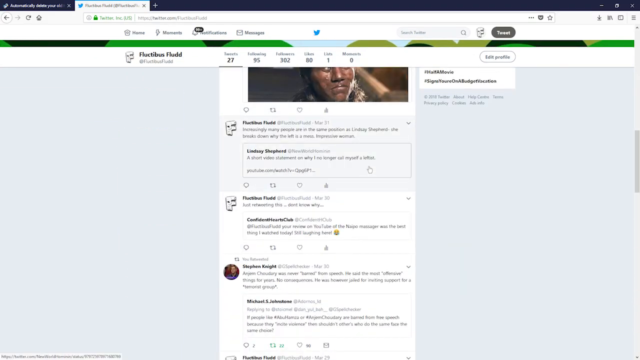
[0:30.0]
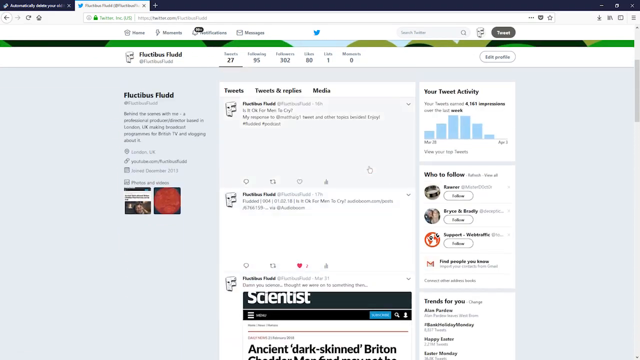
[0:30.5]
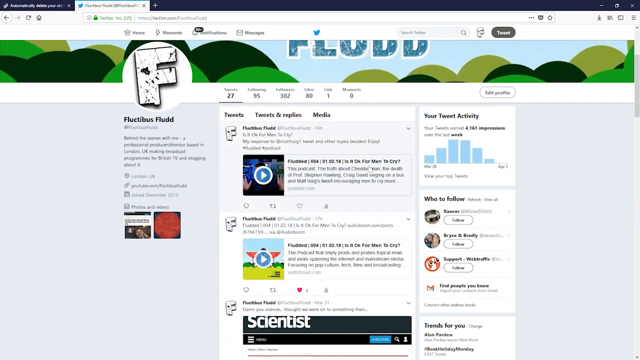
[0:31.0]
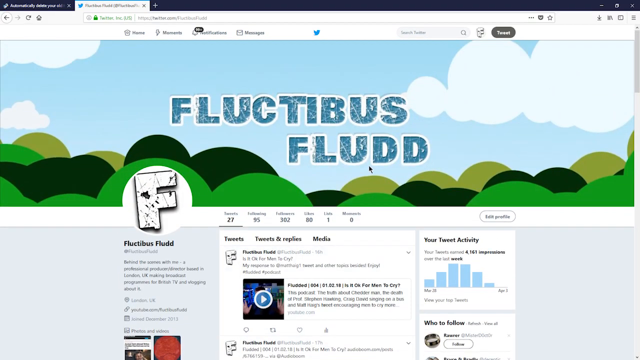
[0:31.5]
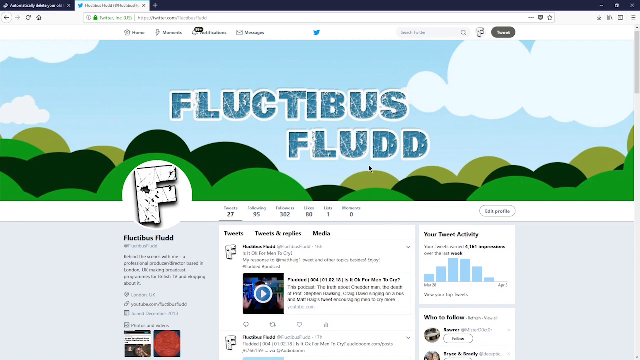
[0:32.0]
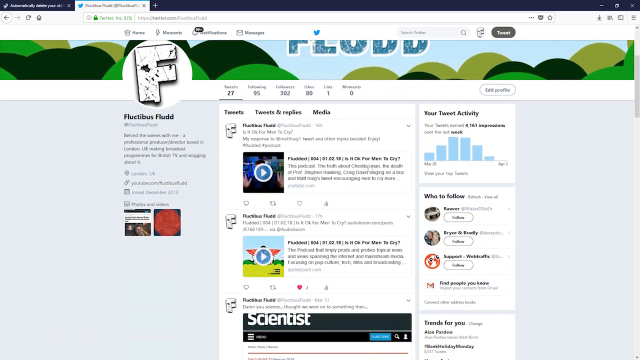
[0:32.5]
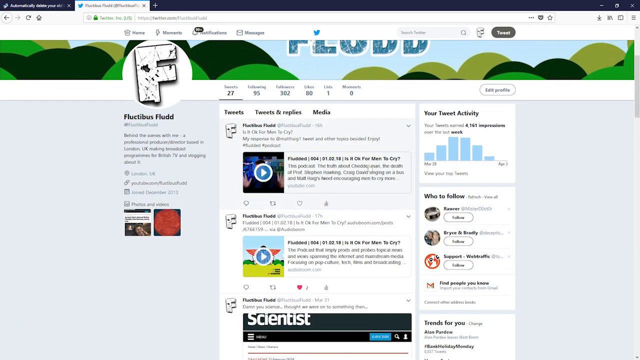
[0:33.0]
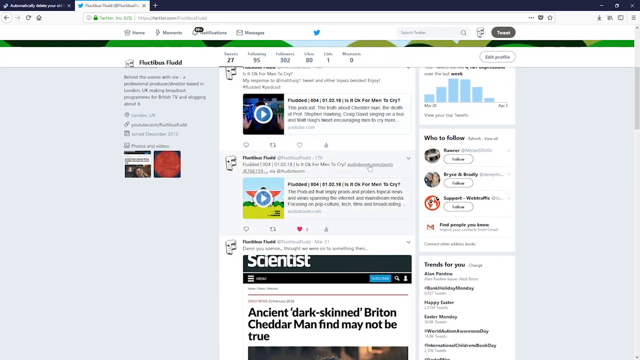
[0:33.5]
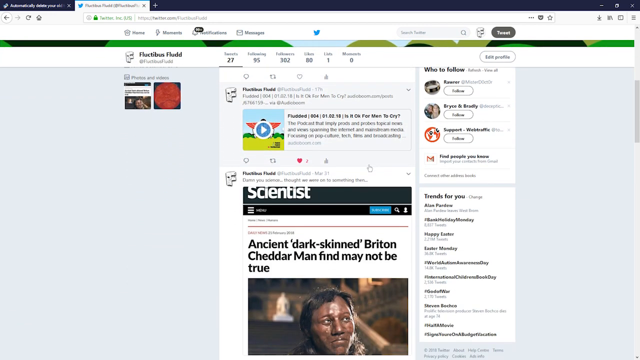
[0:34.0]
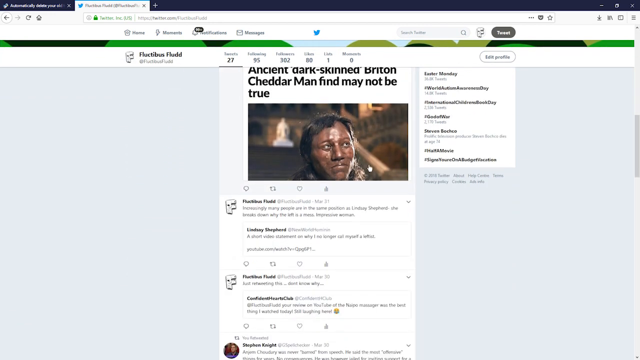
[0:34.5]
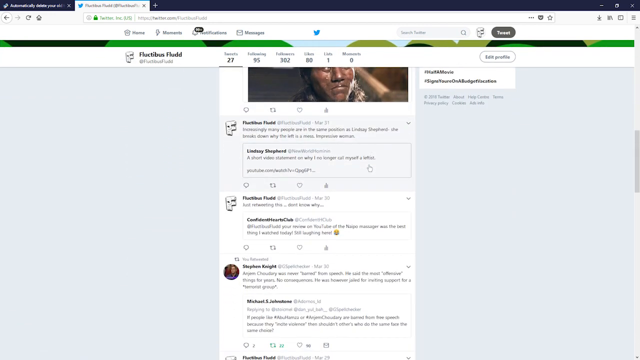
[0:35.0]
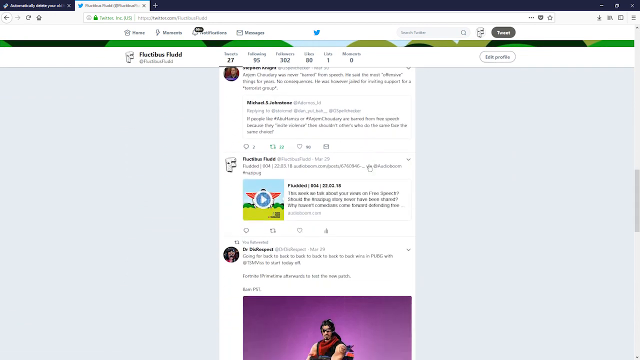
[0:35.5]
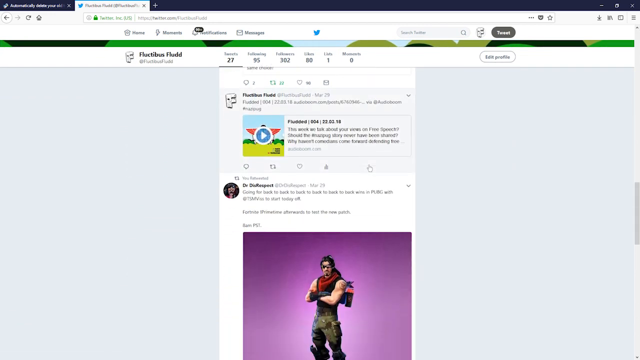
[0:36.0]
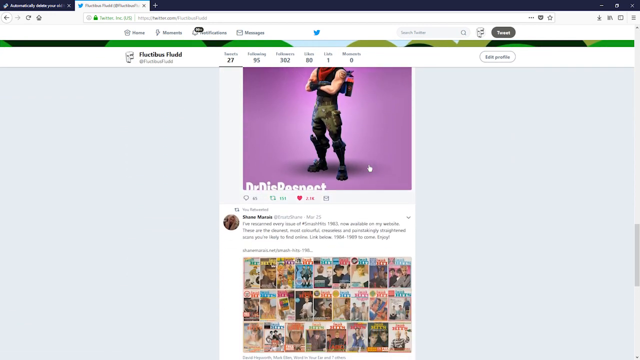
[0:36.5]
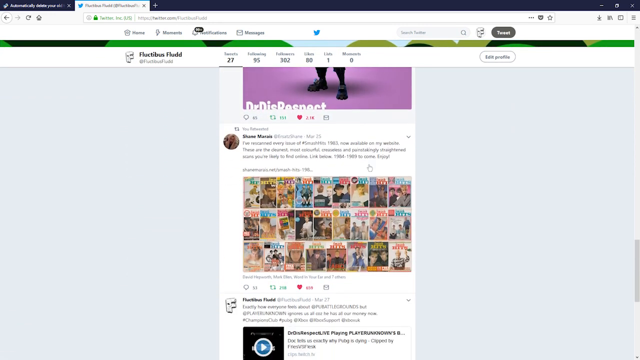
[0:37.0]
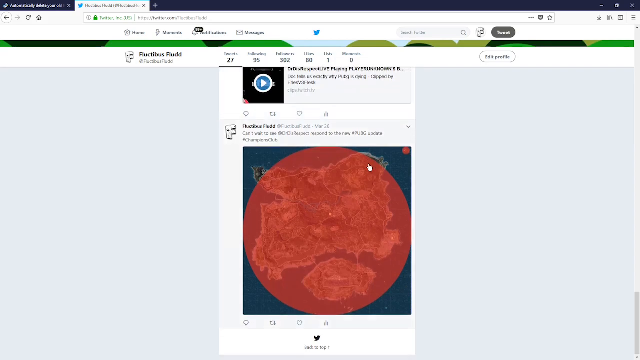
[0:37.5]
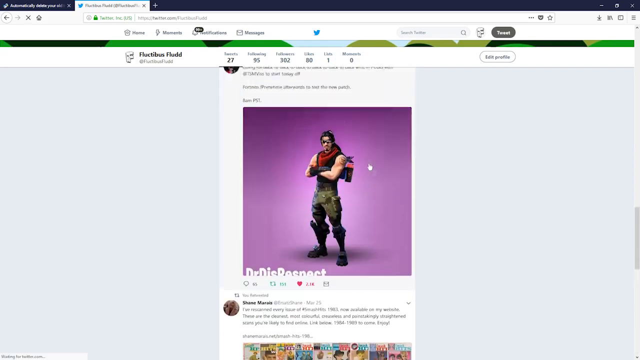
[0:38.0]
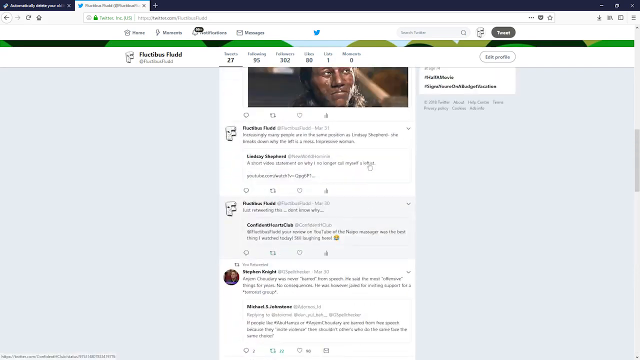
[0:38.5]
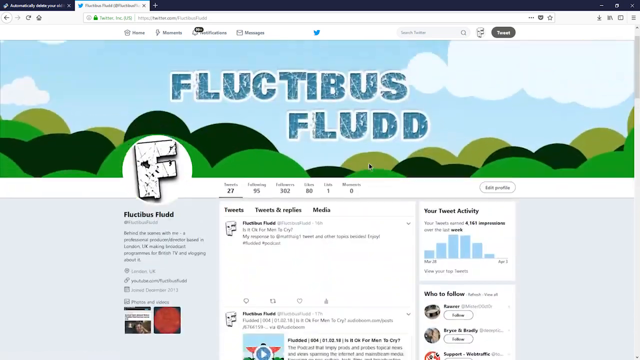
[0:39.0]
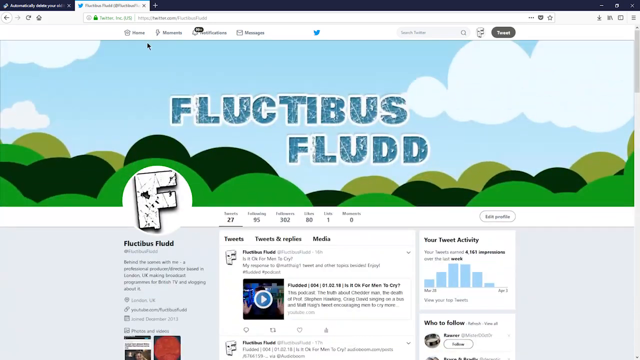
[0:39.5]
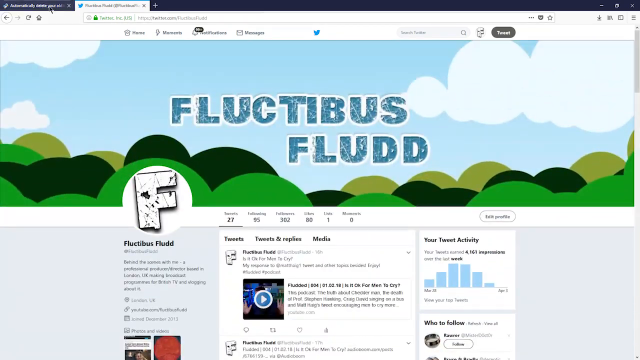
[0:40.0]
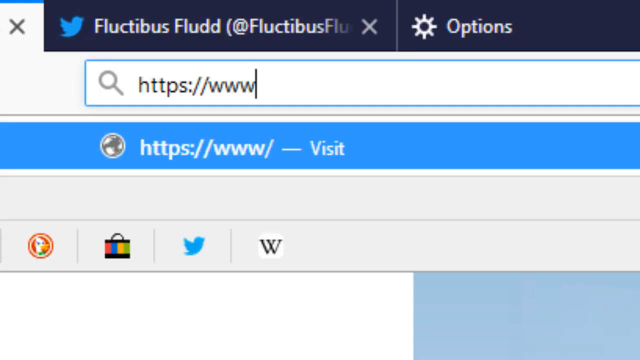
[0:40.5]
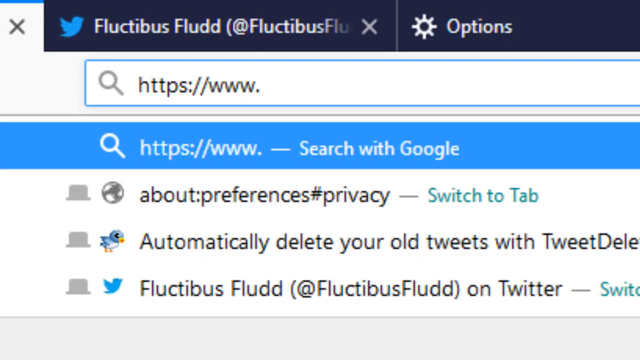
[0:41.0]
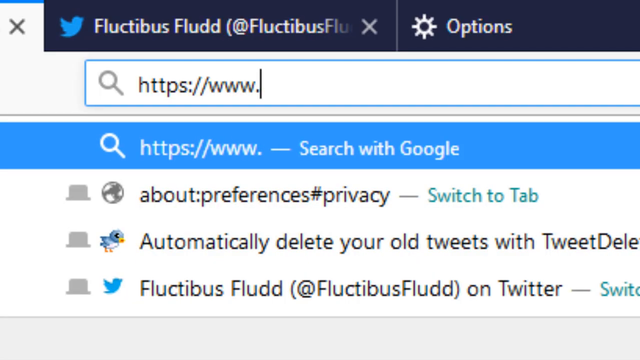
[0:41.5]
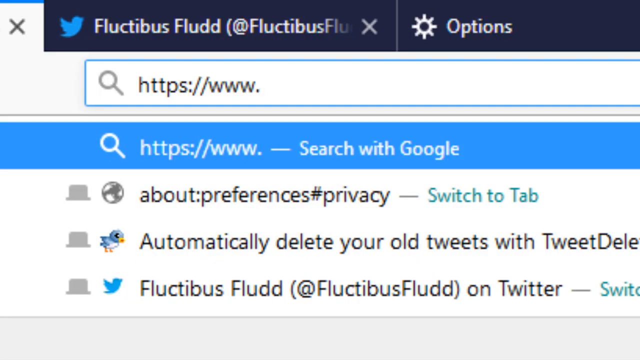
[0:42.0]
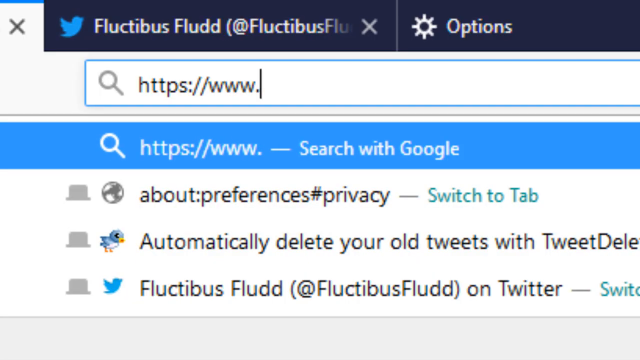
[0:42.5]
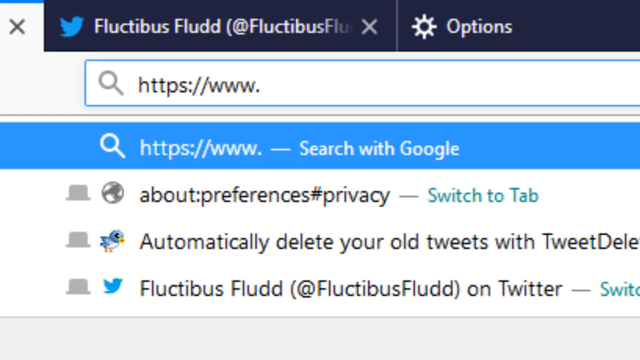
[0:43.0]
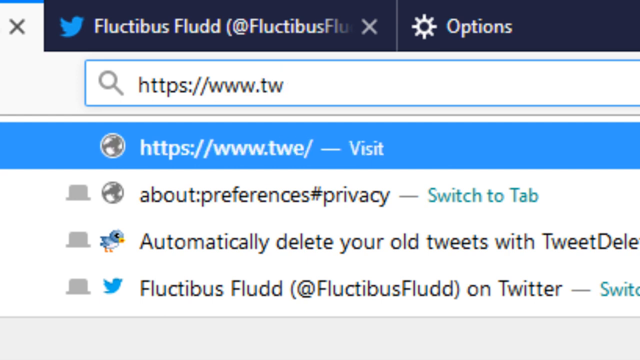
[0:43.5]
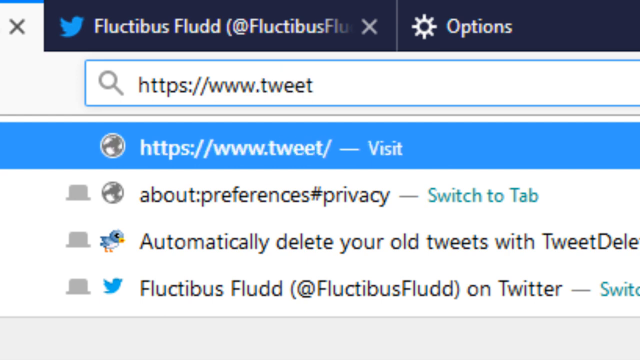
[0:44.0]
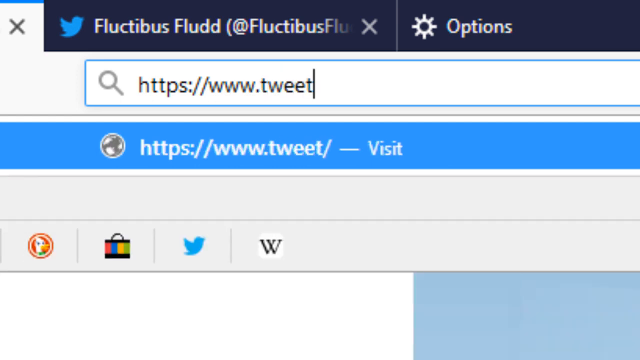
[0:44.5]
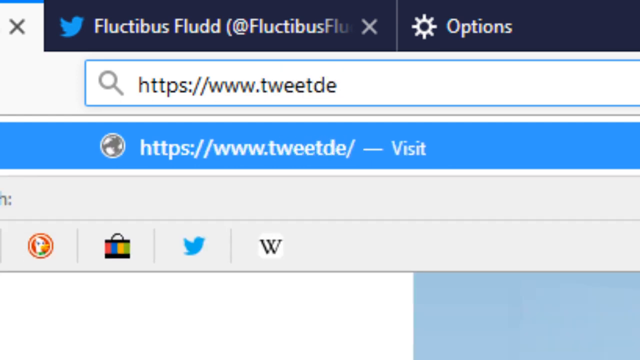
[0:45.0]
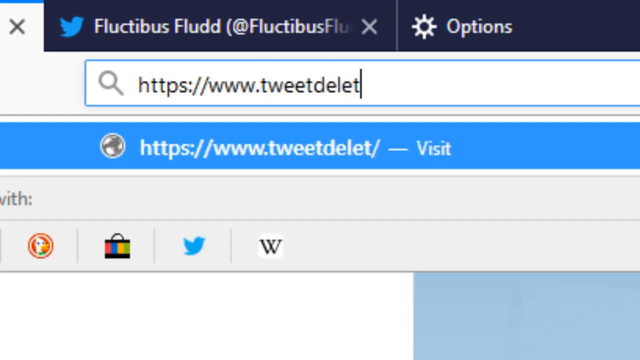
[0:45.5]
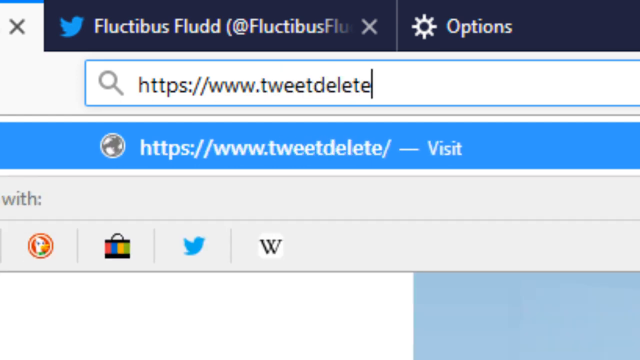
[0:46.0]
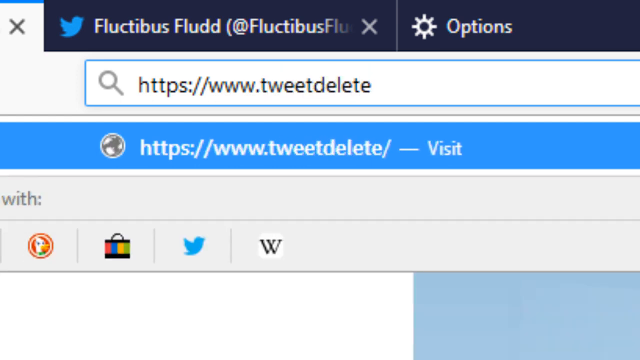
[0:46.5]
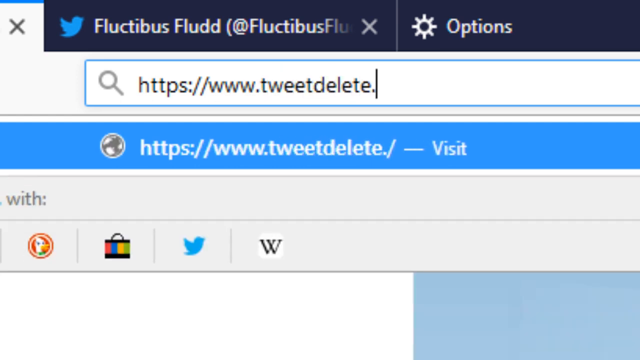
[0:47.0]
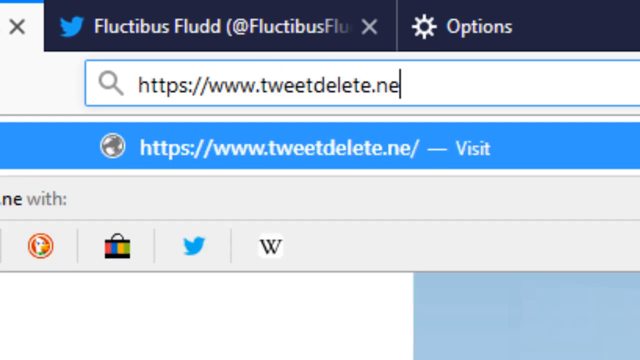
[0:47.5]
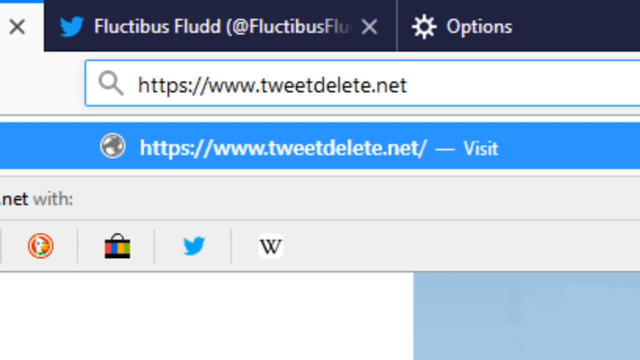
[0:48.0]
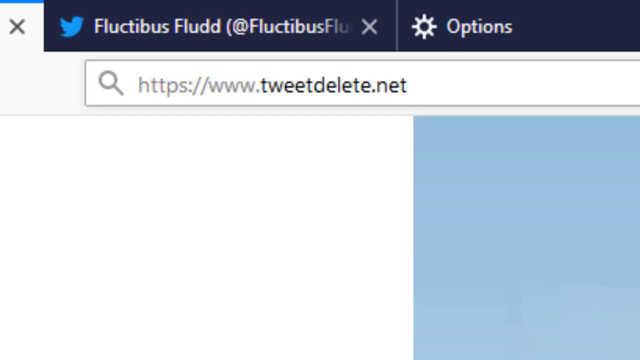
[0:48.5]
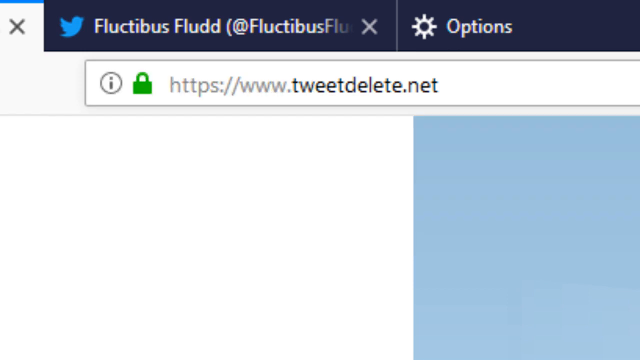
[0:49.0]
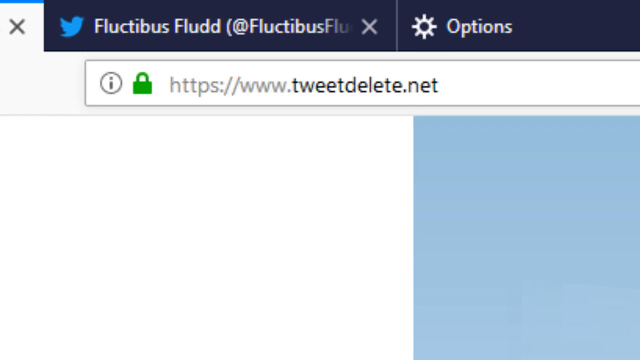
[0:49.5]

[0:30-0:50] The Twitter page for the account Fluctibus Fludd is open, and the user, kind of halfway down the page, scrolls to the top. The header image looks kind of like a cartoon blue sky with white clouds and round treetops, with "Fluctibus Fludd" in the middle in blue font. The user avatar is a white, distressed-looking capital F. The user scrolls down a little to the most recent tweets, goes all the way to the bottom, and scrolls all the way back to the top. The view then zooms in on the browser's URL bar, where the web address "https://www.tweetdelete.net" has been typed, and the user hits enter. A green lock secured-URL icon appears in front of the URL and the page begins to load.